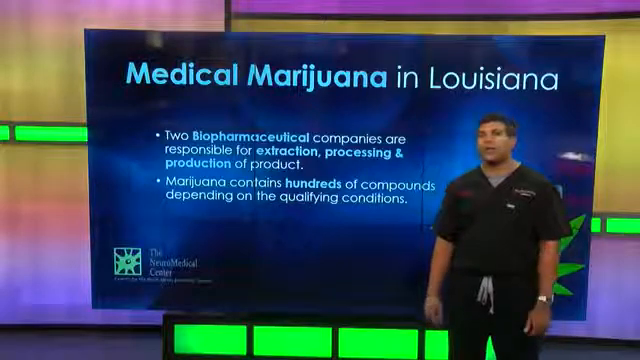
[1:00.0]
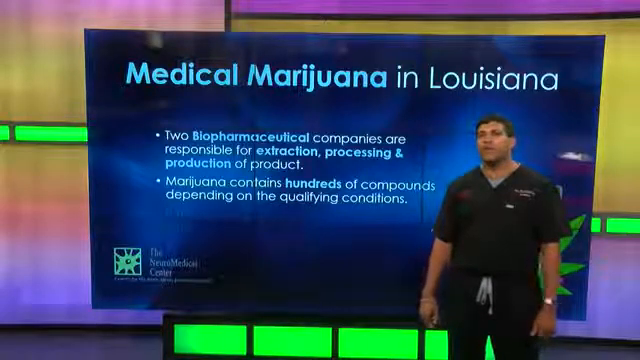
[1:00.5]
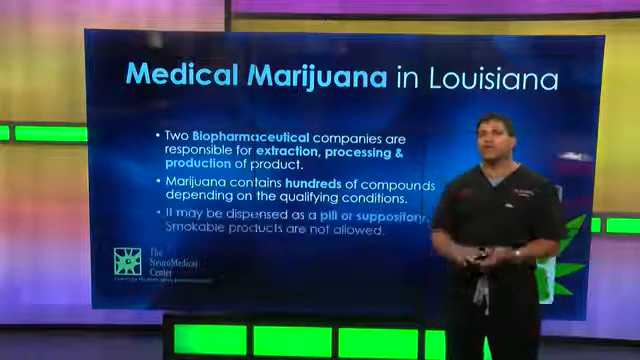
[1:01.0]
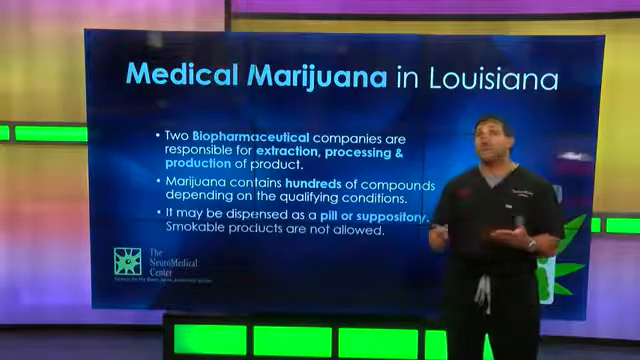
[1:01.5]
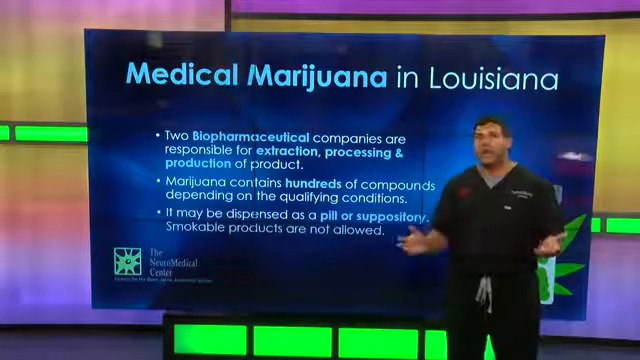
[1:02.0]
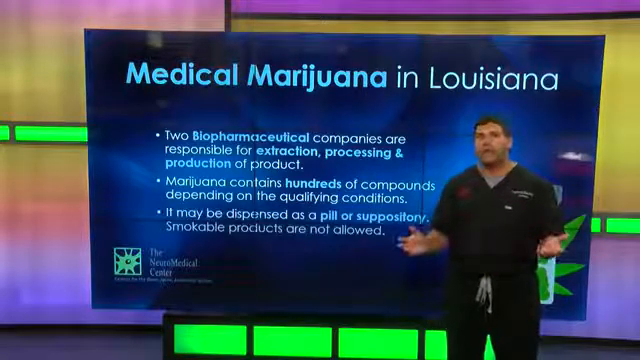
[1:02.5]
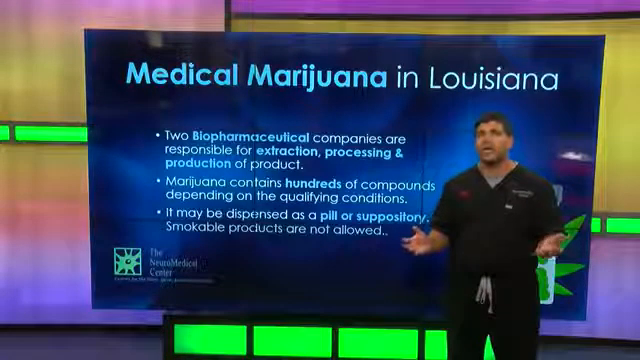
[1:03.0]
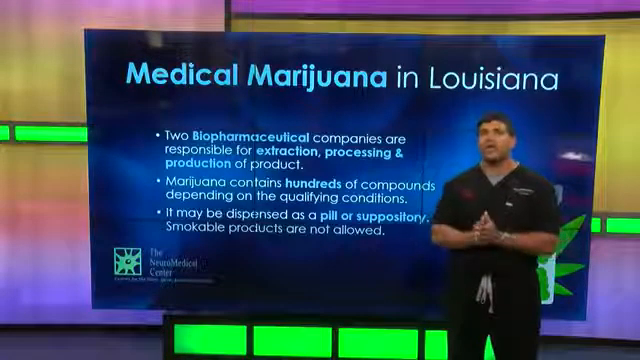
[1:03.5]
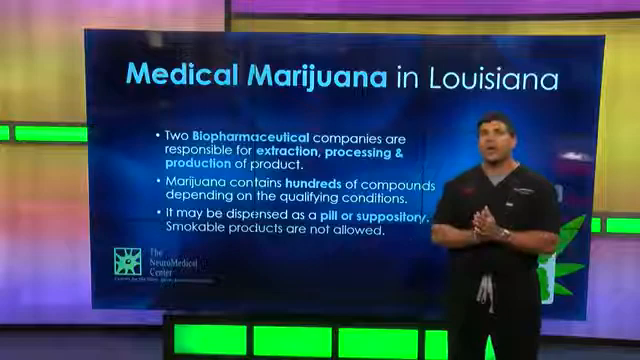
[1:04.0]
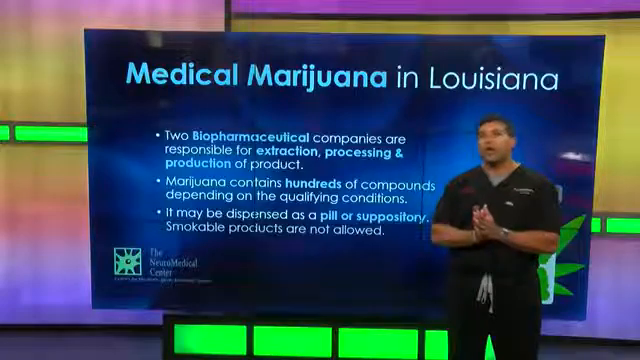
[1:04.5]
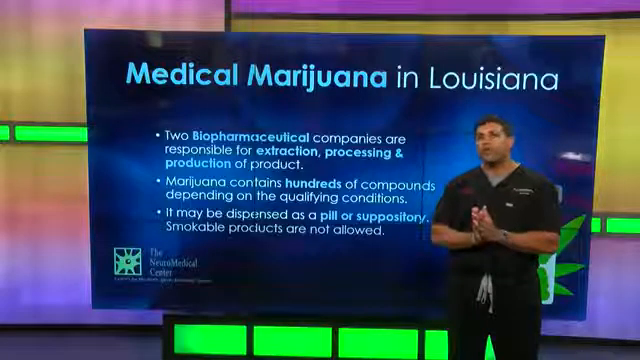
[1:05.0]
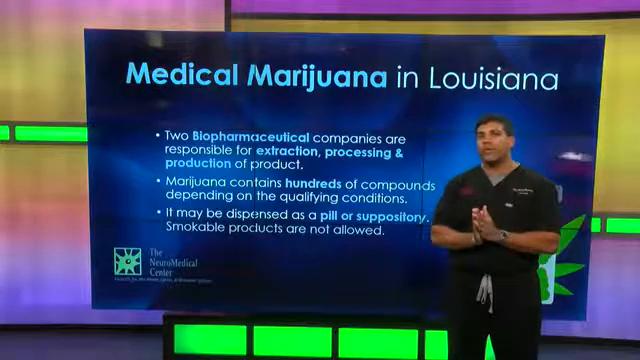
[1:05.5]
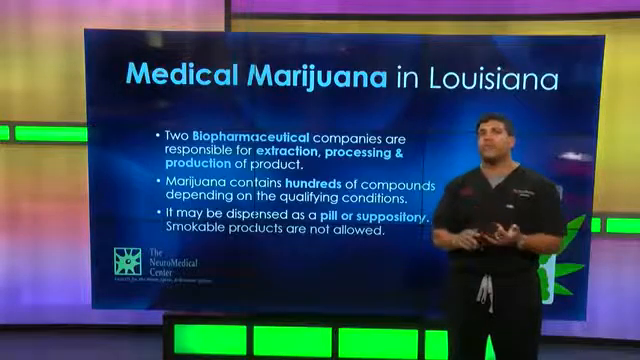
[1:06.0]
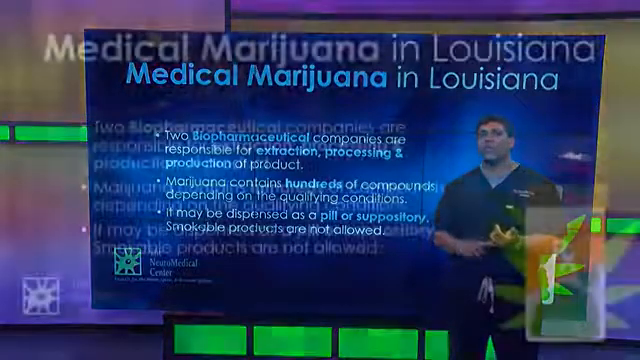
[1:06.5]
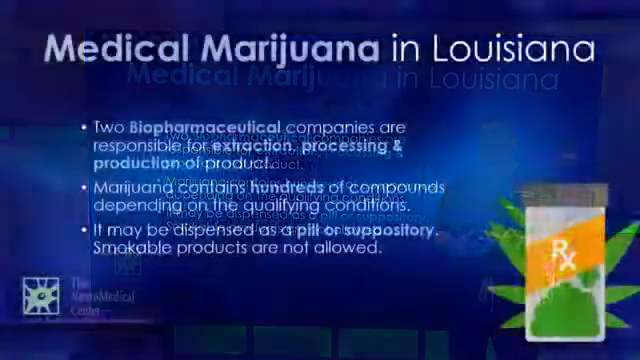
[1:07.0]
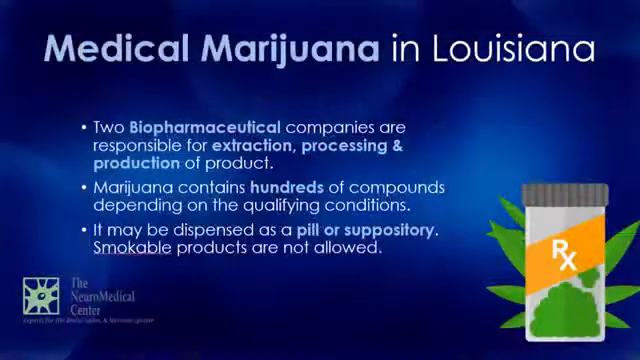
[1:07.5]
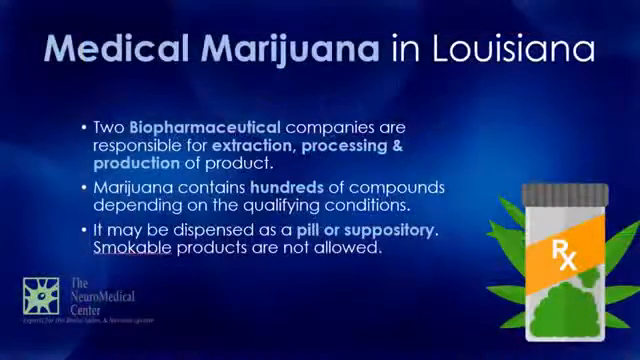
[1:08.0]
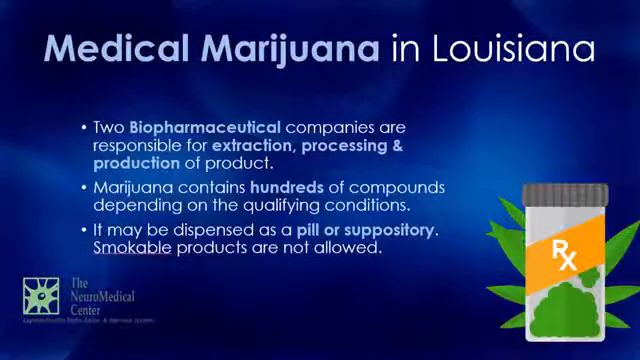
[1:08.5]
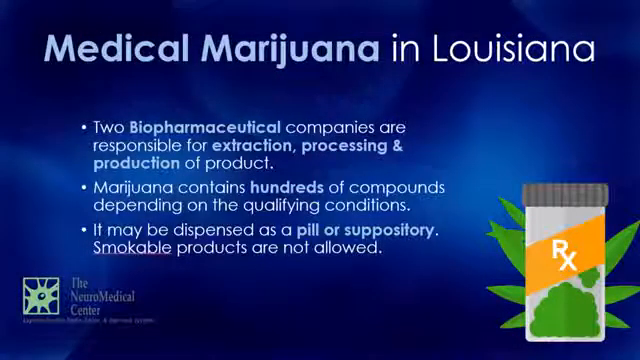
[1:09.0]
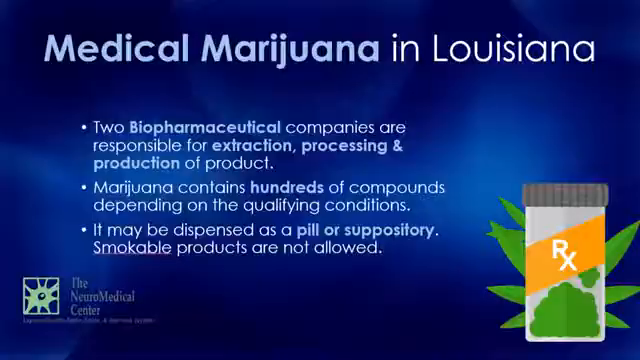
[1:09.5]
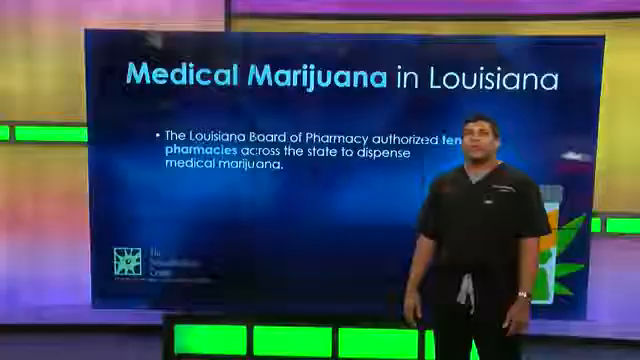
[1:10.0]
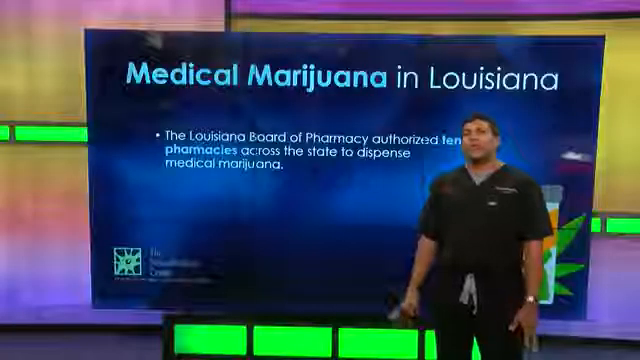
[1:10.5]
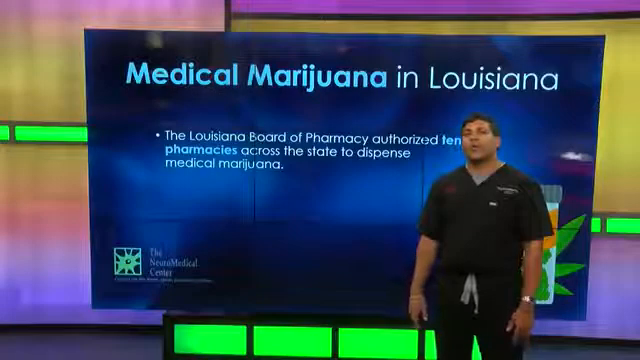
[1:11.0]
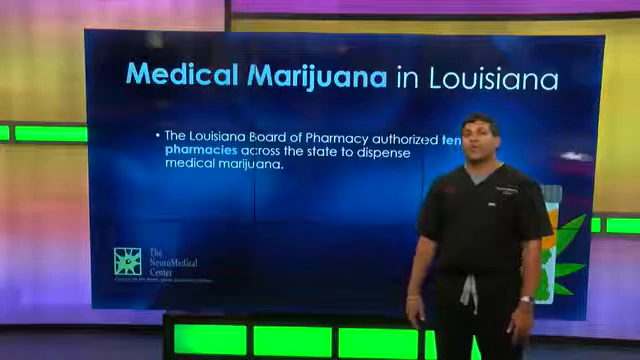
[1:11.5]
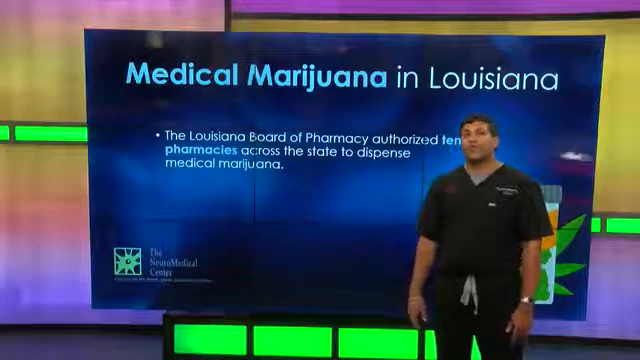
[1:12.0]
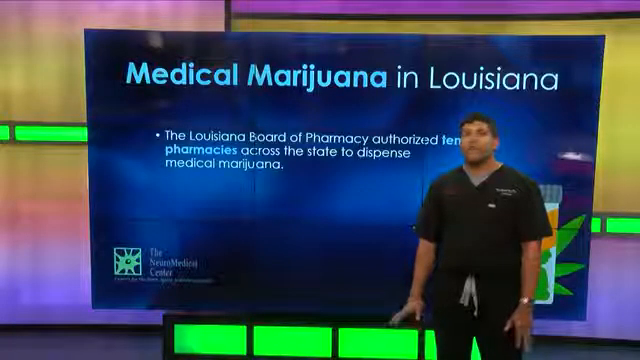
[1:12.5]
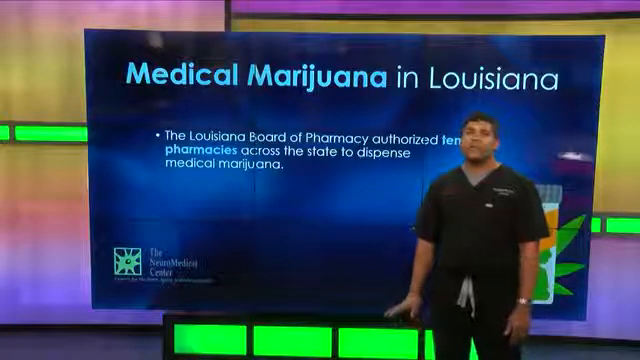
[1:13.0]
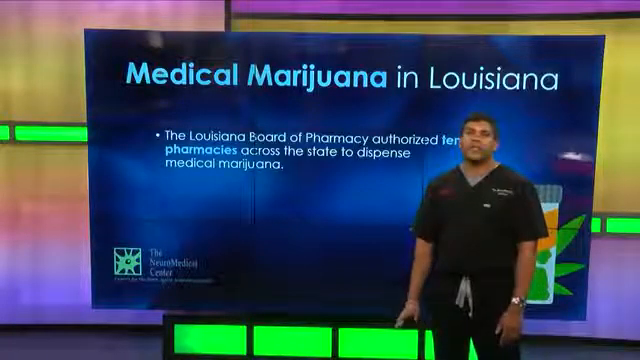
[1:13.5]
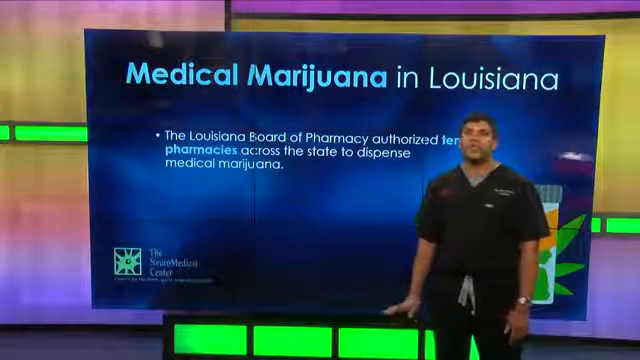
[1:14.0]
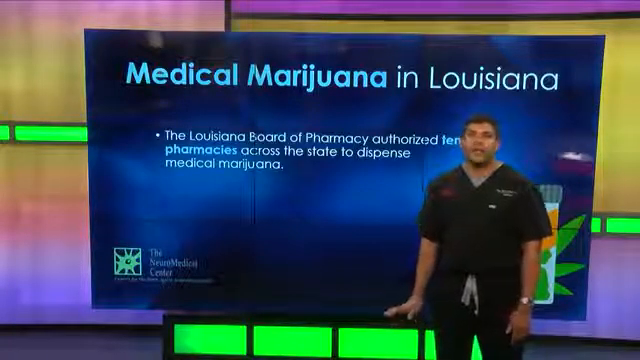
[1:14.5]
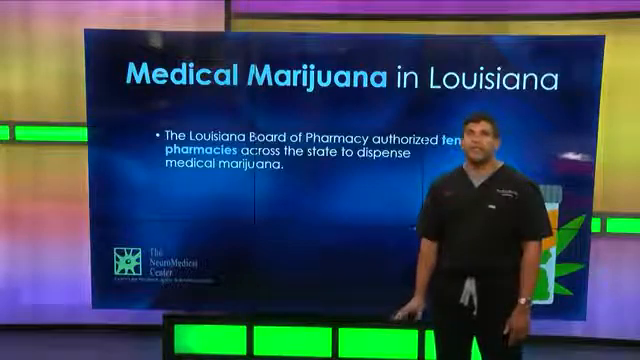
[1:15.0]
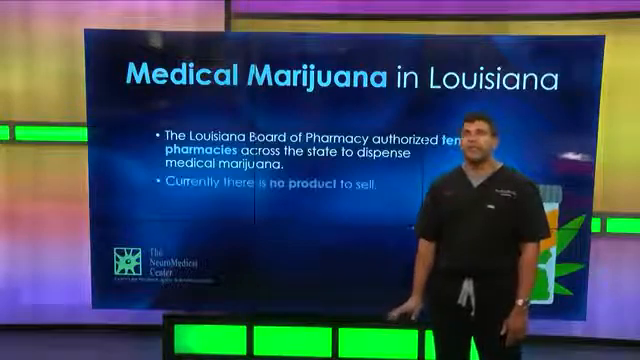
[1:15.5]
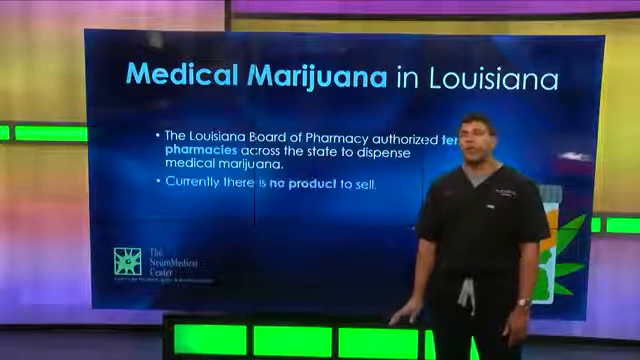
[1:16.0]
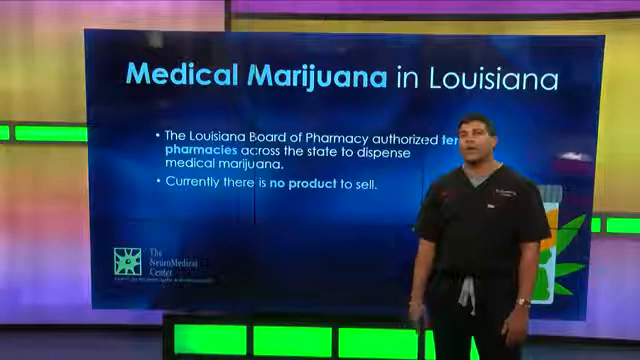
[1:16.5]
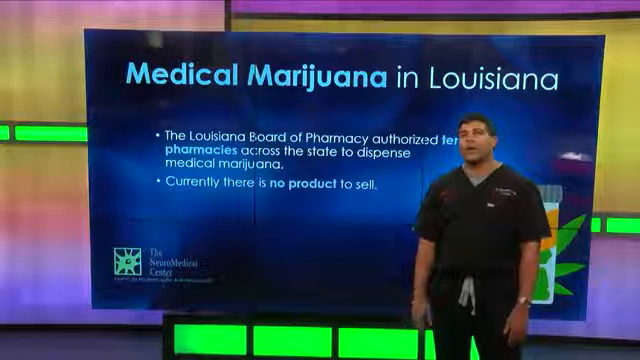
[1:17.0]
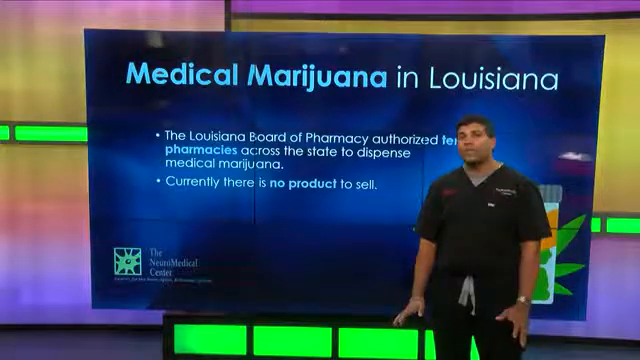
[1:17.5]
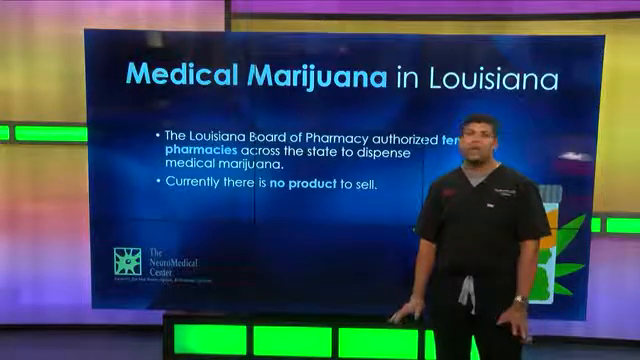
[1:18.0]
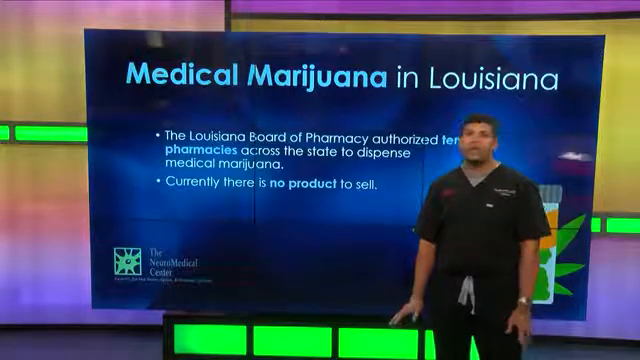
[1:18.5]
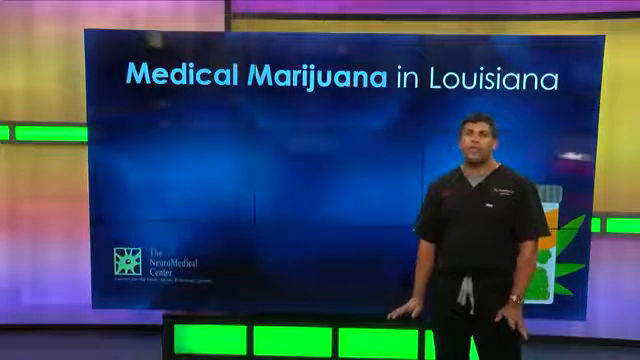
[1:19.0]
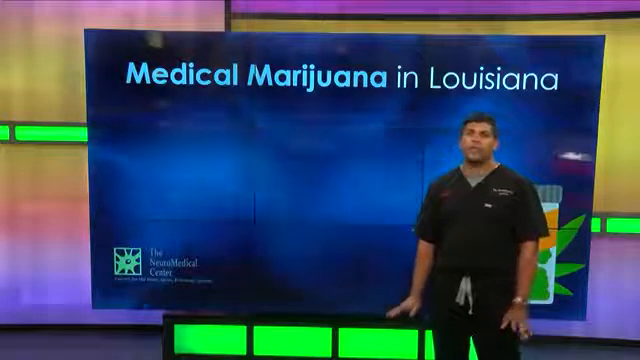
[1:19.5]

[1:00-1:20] In the newsroom there are two backgrounds. The one at the very back has pale green, lime green, lavender and purple. In front of it is a smaller screen in blue and lighter blues, with blue text reading "medical marijuana in Louisiana," followed by three bullet points and text about medical marijuana. A doctor stands in front of that screen wearing white scrubs, with red text on the left side of the chest and white text on the right side. He wears a wristwatch on his left wrist and uses hand gestures as he makes his points: palms together, palms out, touching fingers. The video transitions to a close-up of the front screen, which is dark blue and shows "medical marijuana in Louisiana" followed by three bullet points about medical marijuana. At the bottom right is an image of a prescription pill bottle with the Rx symbol, with images of marijuana leaves behind it and on it.